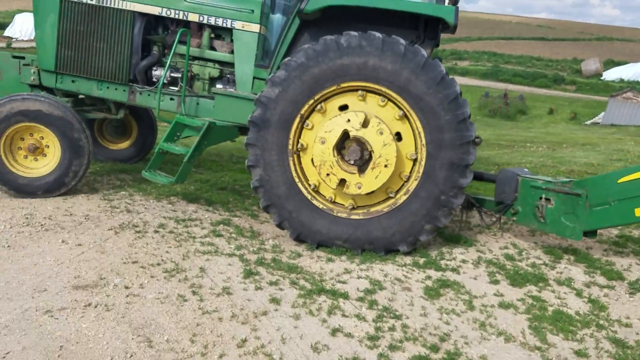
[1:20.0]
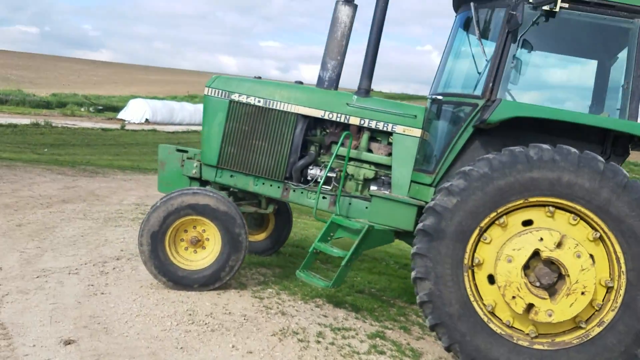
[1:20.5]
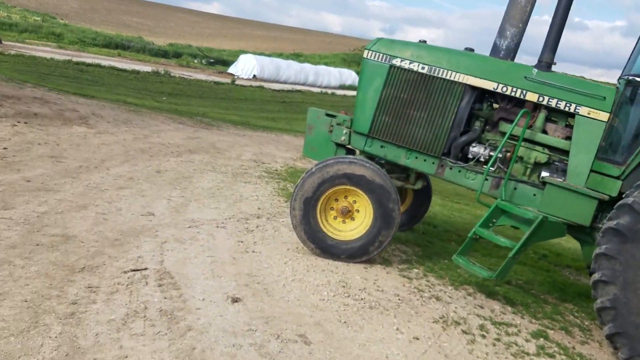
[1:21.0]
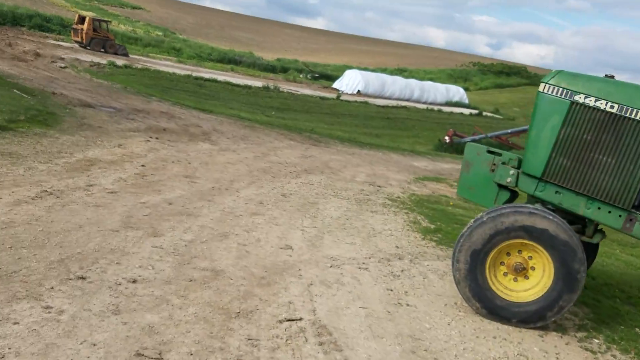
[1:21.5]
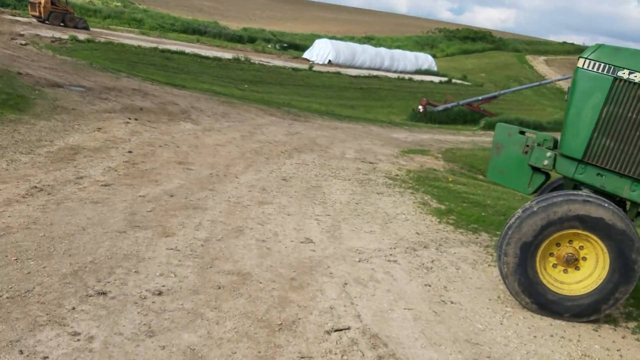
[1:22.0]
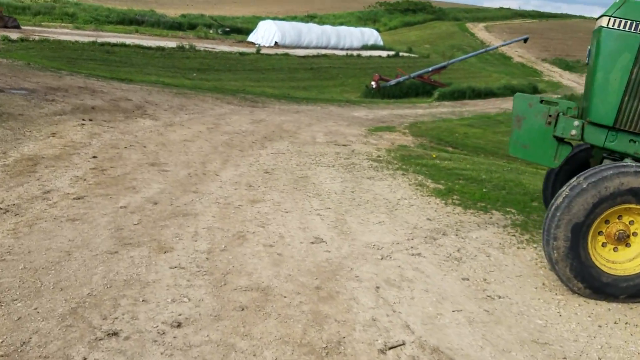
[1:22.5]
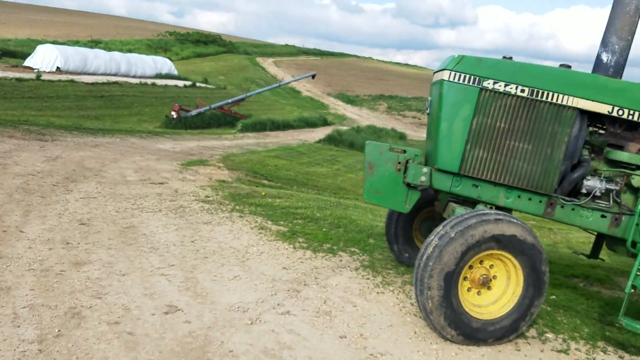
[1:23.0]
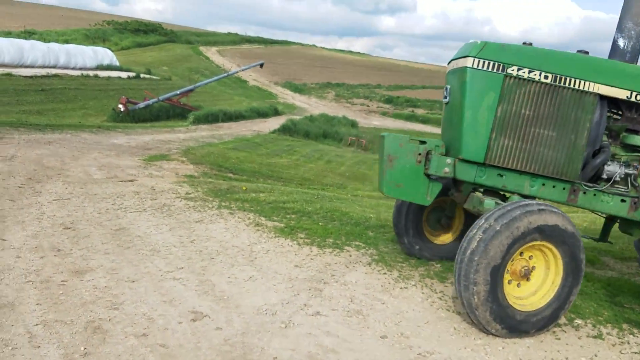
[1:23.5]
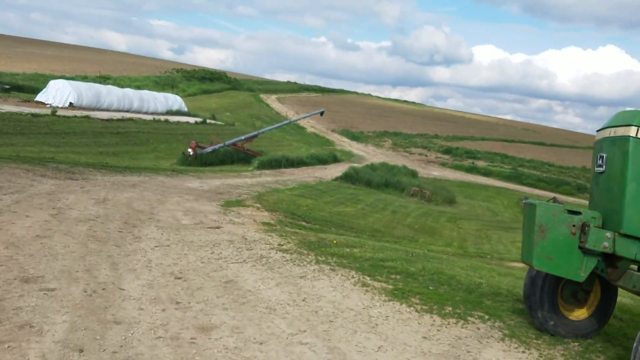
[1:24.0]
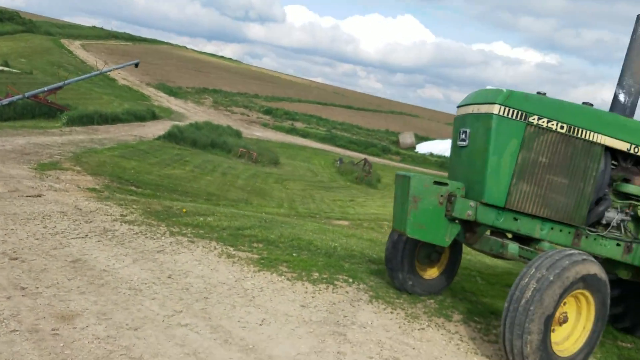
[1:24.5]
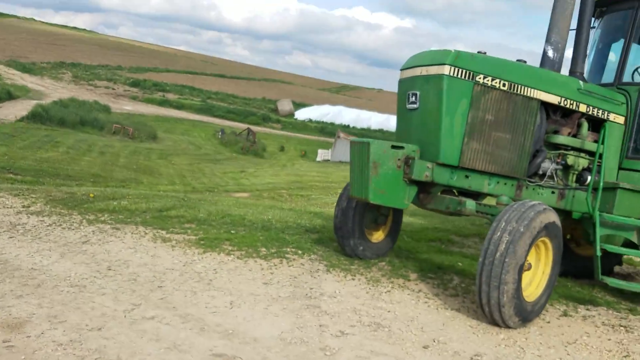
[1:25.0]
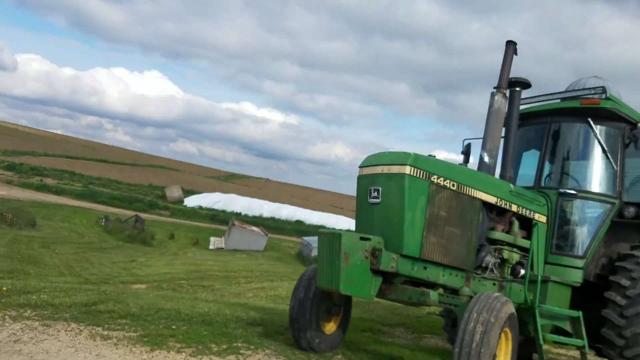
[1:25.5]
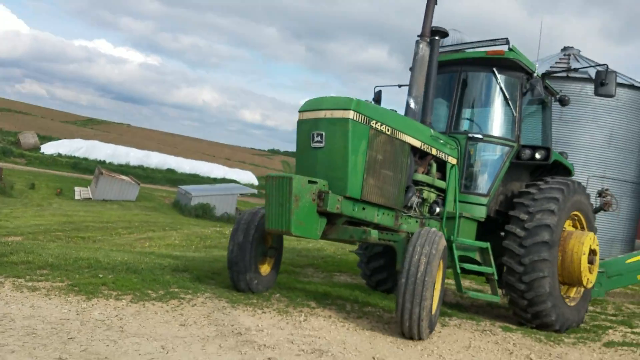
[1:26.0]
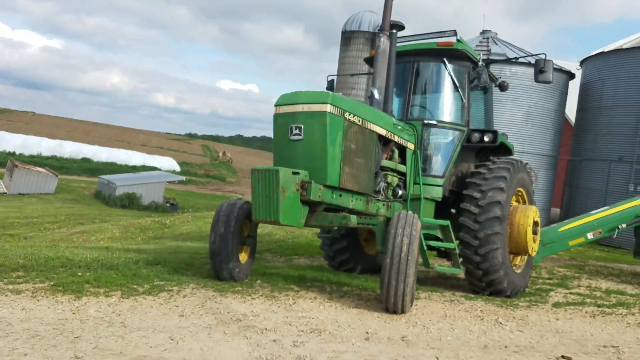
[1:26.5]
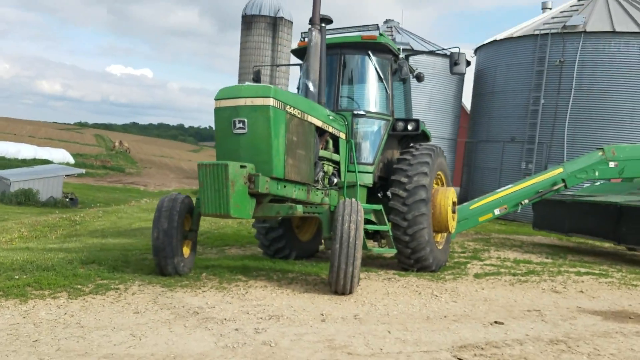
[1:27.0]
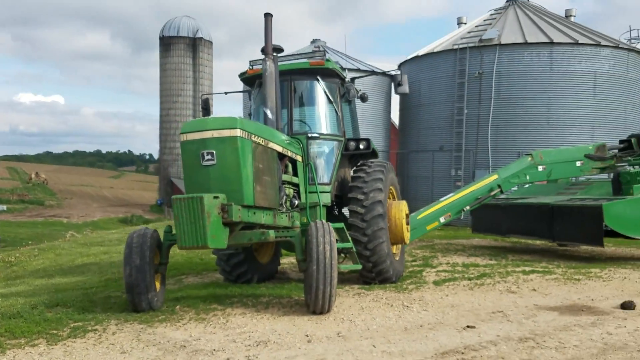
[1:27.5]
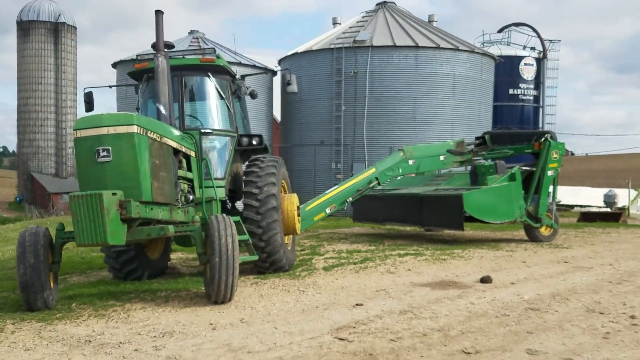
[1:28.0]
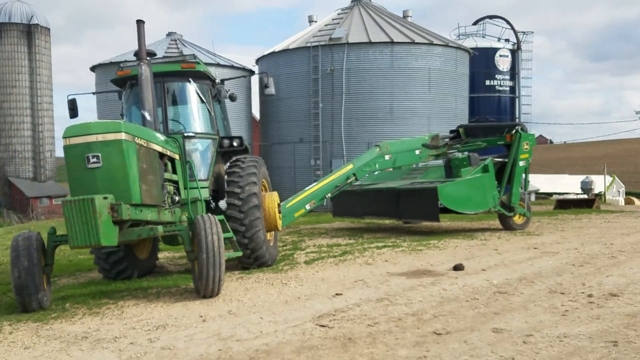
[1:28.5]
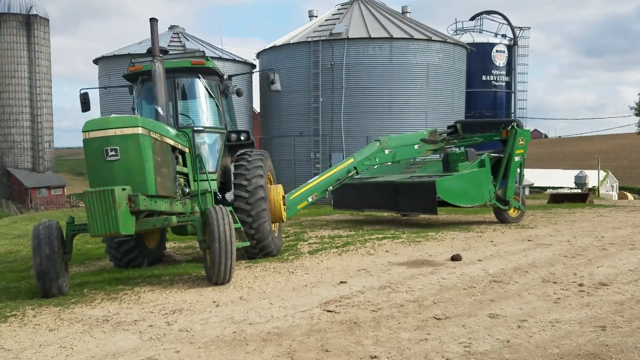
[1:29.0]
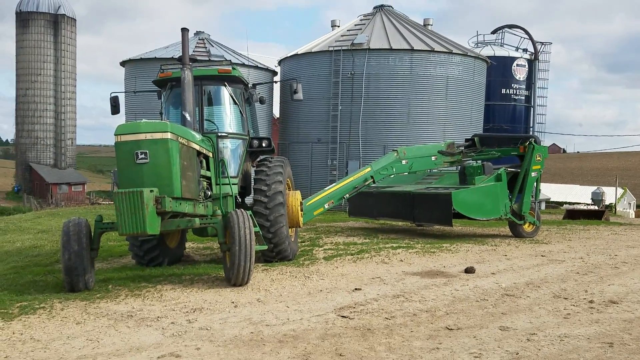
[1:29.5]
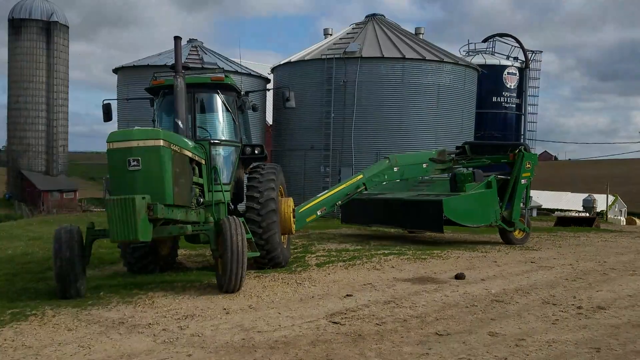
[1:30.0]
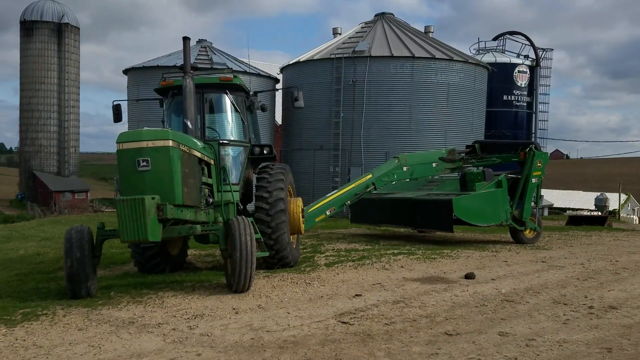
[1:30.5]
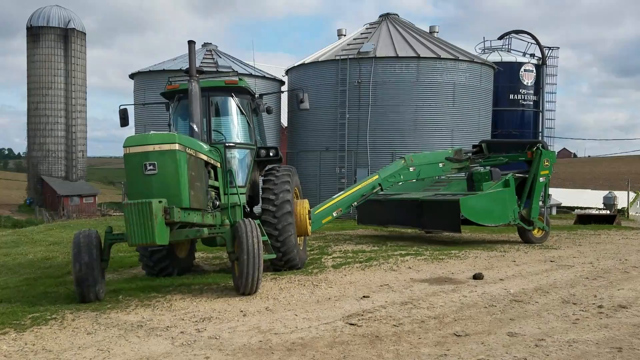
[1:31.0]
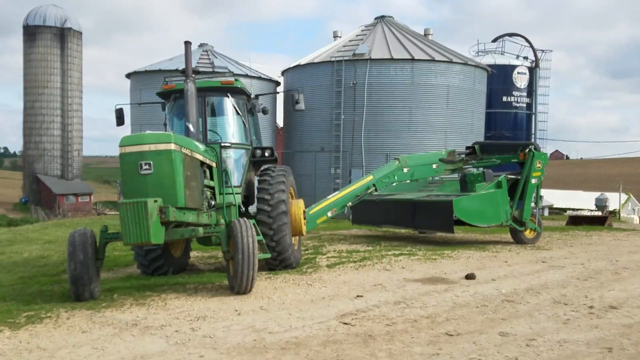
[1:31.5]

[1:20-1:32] In a homemade video of his John Deere tractor, the farmer goes around showing different parts and wiggling them, seemingly to make sure everything is tight before use. The rear tires of the tractor possibly need to be filled. The scene is then shown from afar so everything is visible. There are four silos, all with ladders. To the left is a silo that looks older and taller and might be the original; a tiny house painted a rust color is attached to it, and there is really tall grass around it, so it seemingly isn't used much. The last silo is blue, and there is a building beyond it. There is a white building with a brown roof, and behind it something brown sticks out with a very narrow, peaked roof. All of the buildings have peaked roofs.